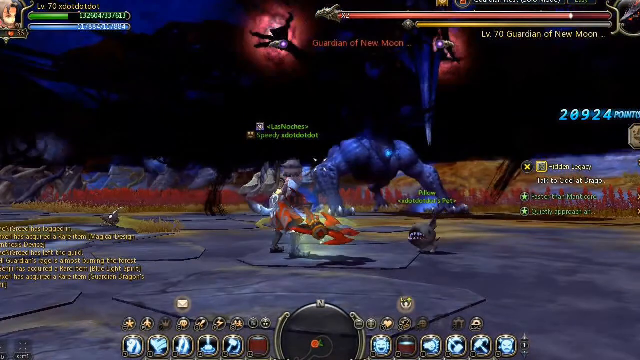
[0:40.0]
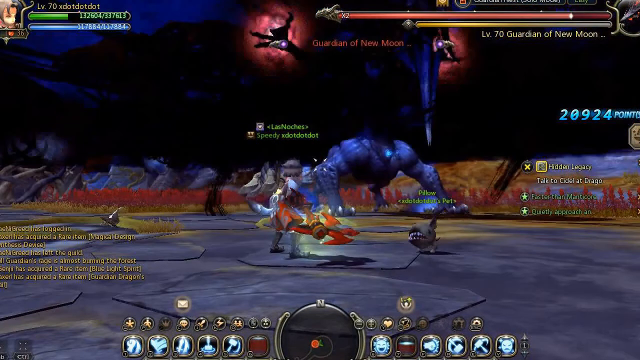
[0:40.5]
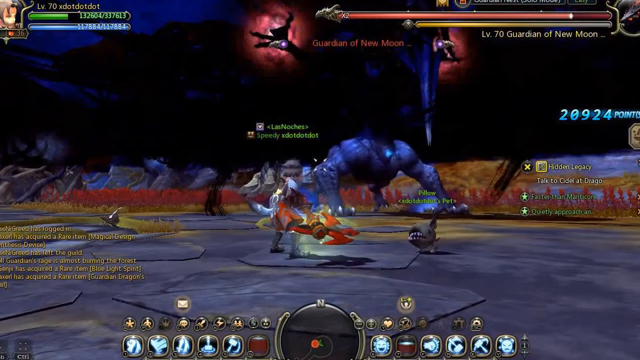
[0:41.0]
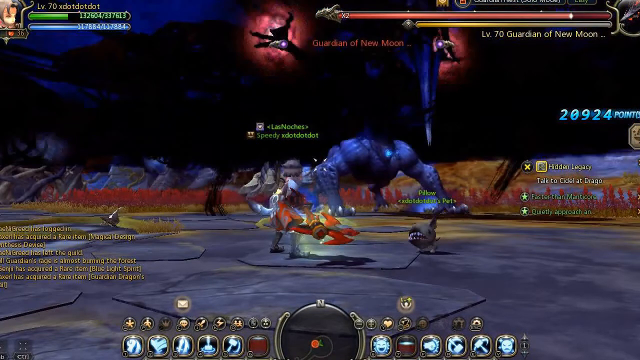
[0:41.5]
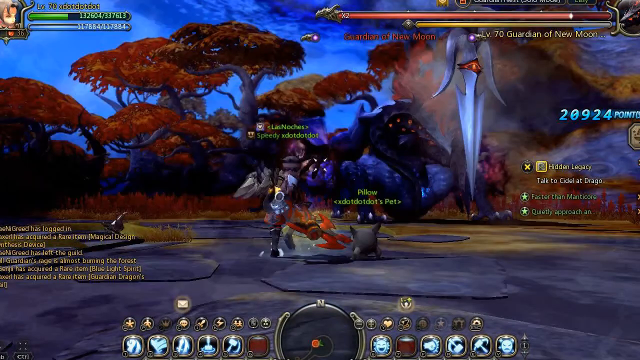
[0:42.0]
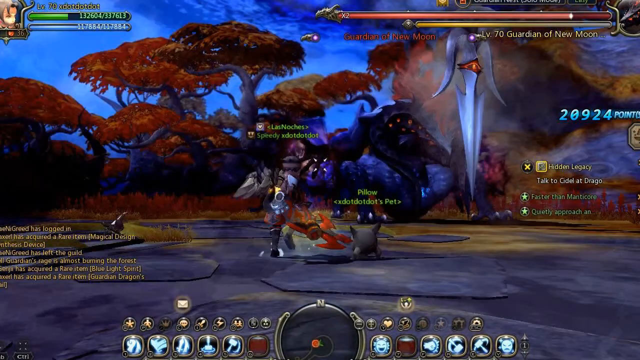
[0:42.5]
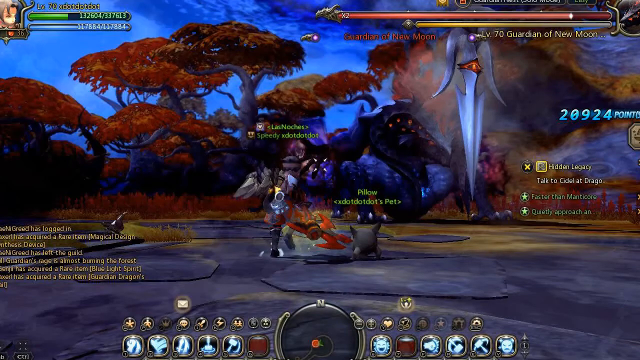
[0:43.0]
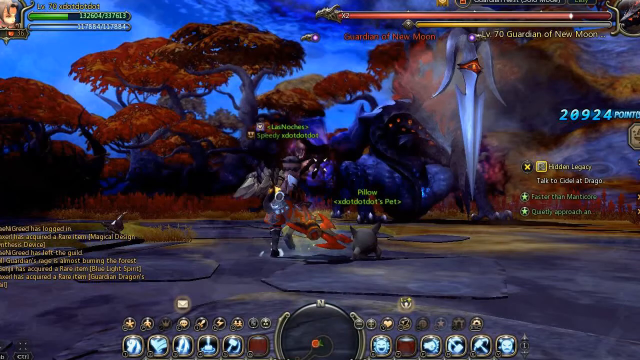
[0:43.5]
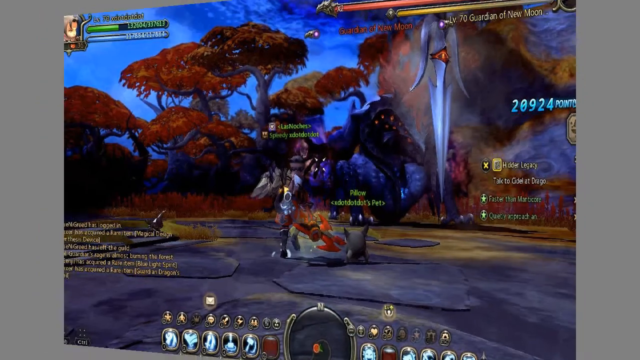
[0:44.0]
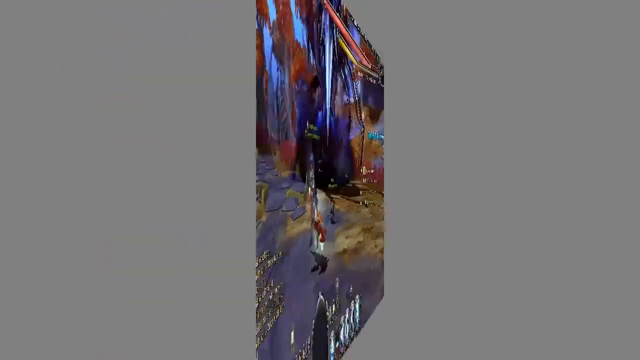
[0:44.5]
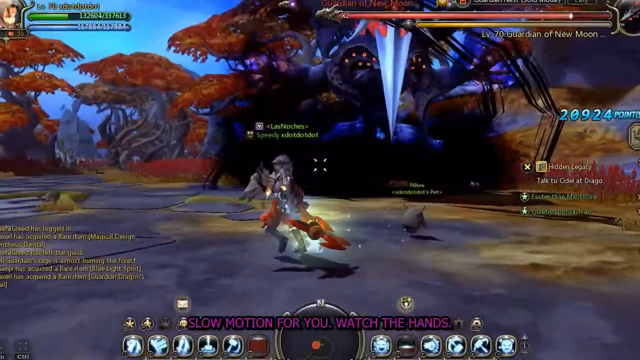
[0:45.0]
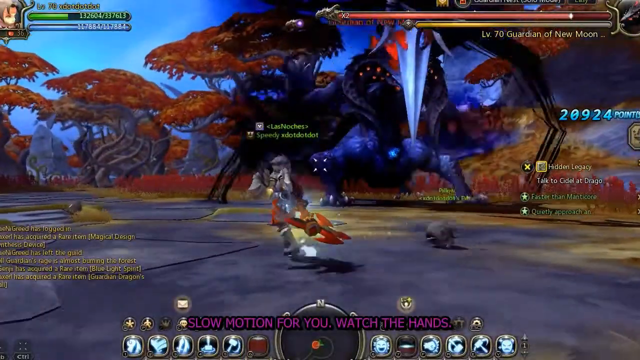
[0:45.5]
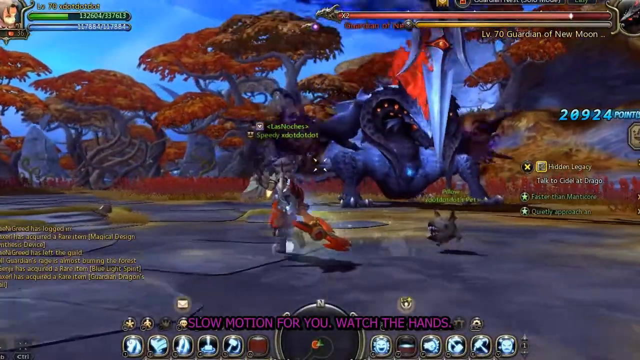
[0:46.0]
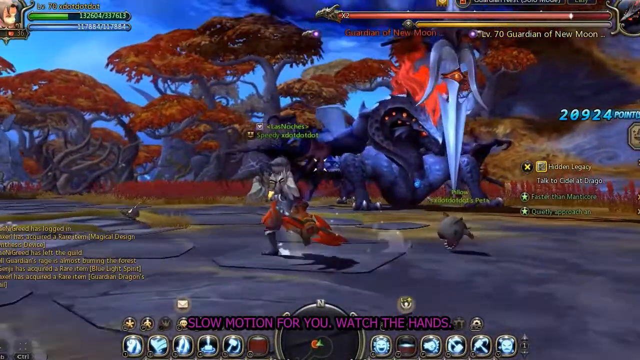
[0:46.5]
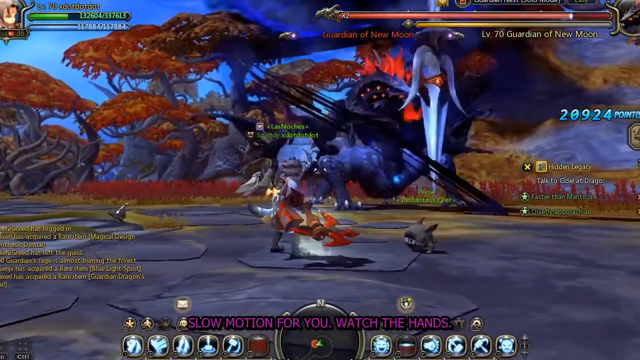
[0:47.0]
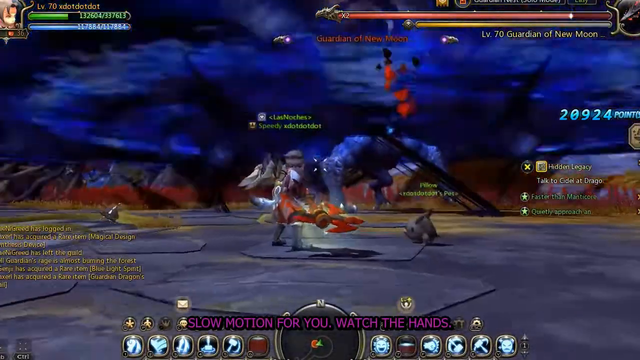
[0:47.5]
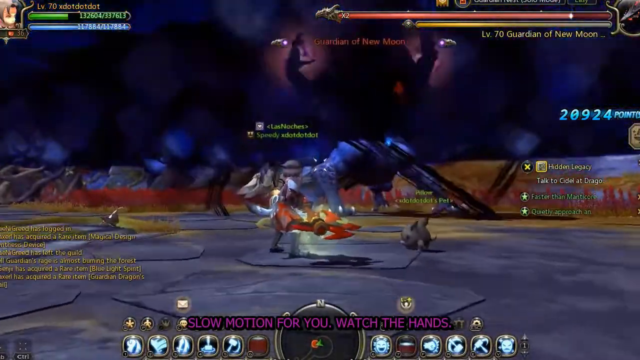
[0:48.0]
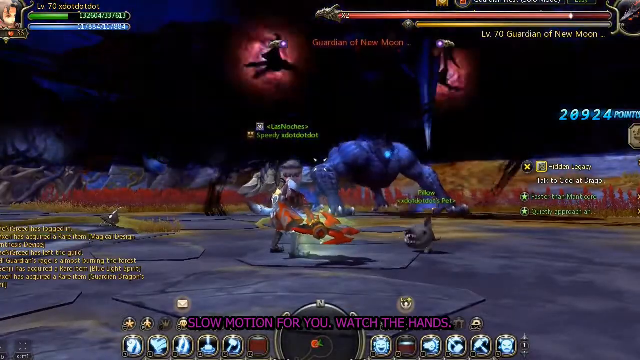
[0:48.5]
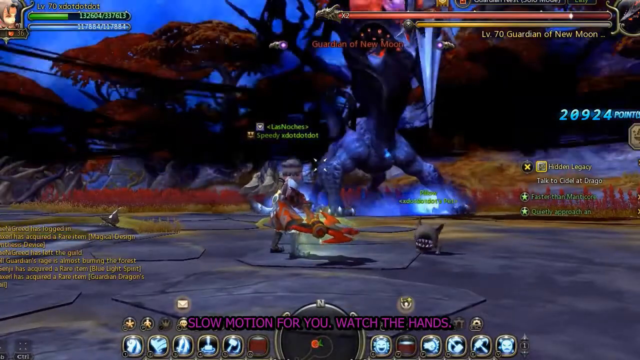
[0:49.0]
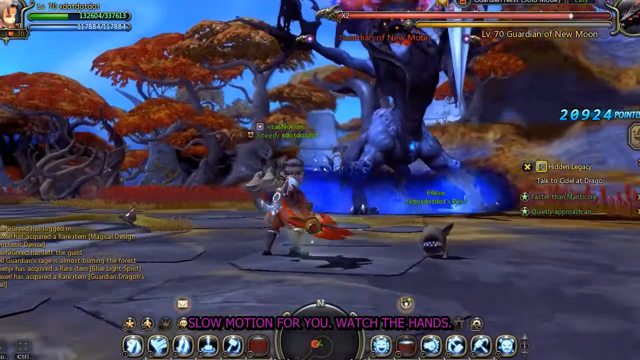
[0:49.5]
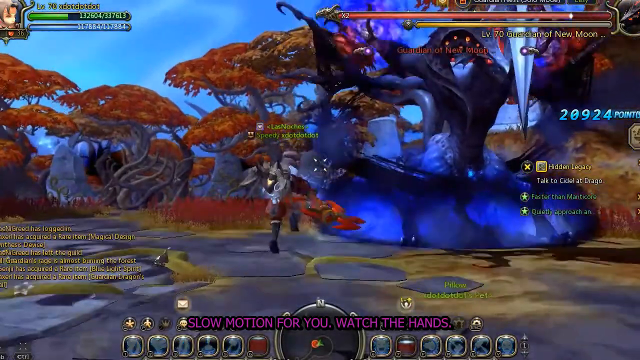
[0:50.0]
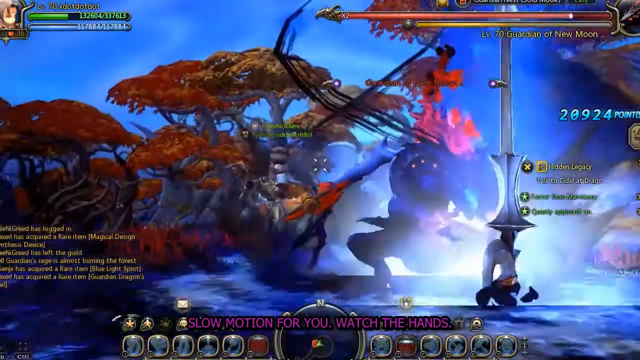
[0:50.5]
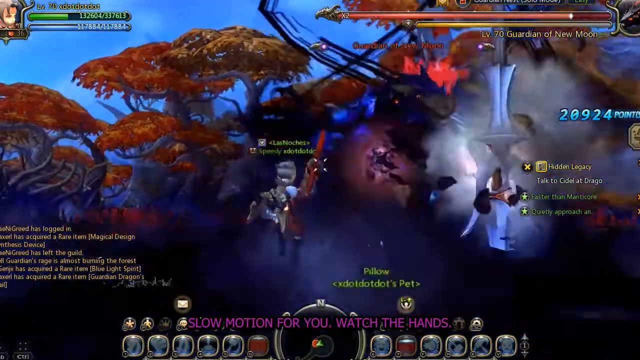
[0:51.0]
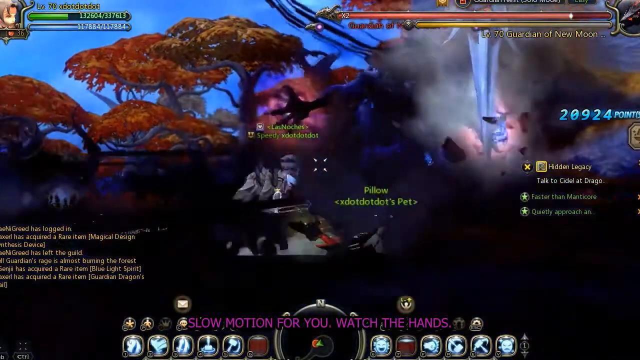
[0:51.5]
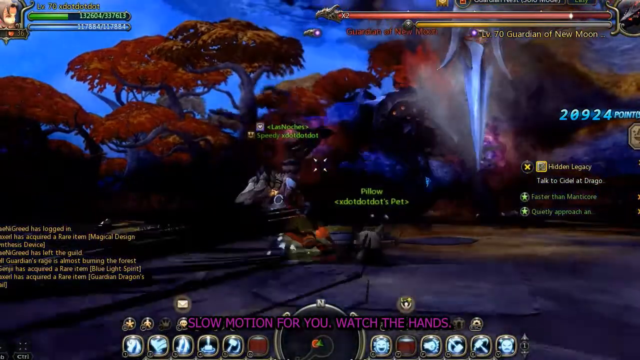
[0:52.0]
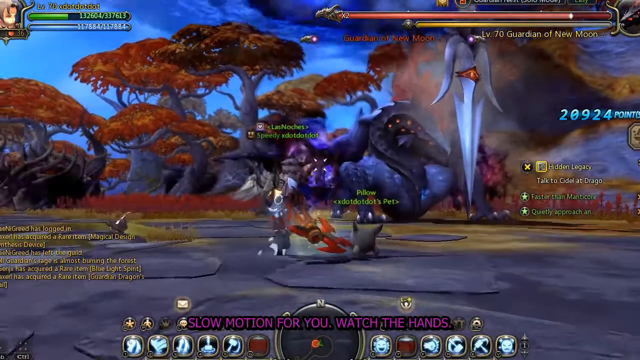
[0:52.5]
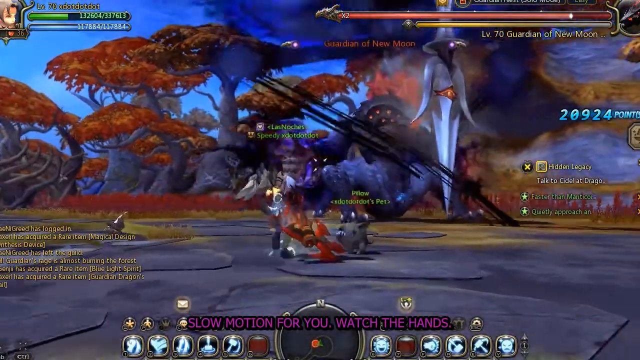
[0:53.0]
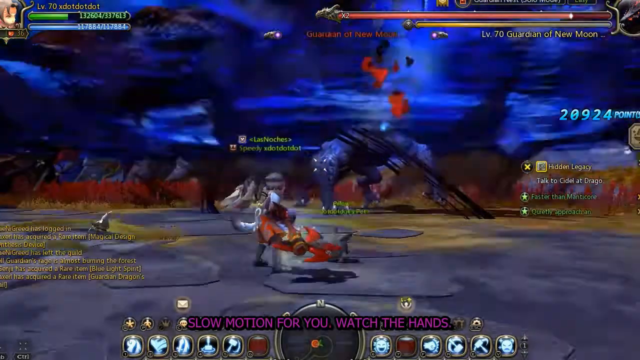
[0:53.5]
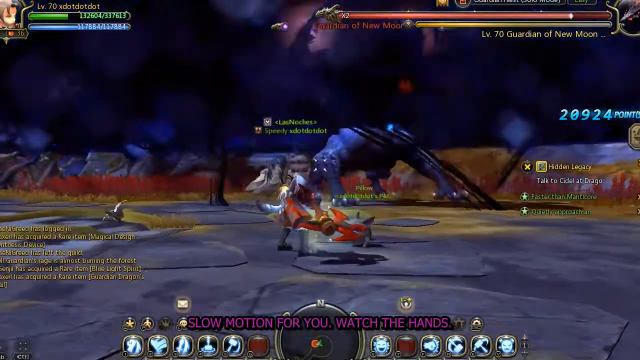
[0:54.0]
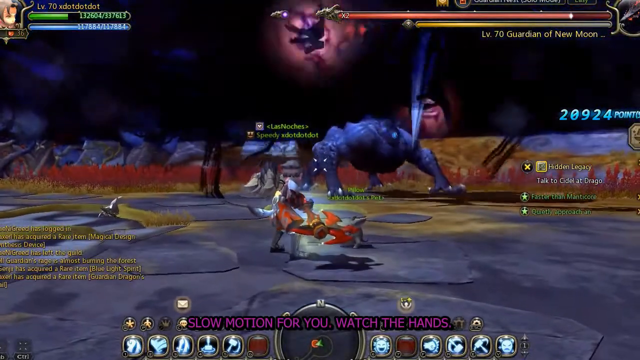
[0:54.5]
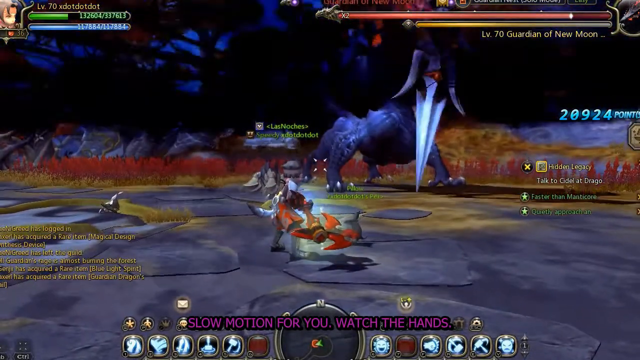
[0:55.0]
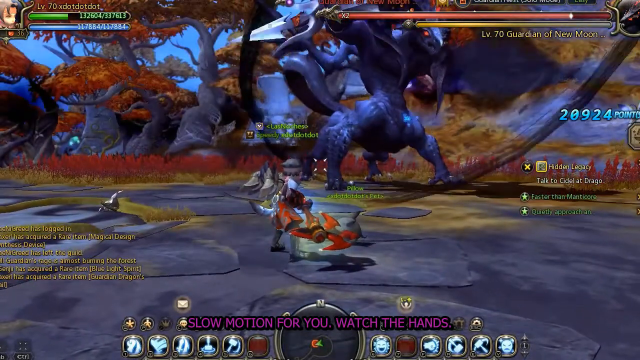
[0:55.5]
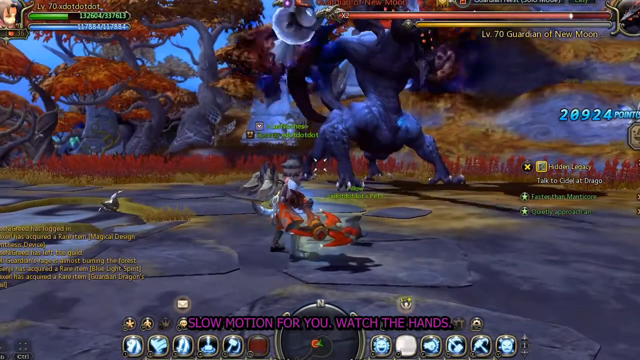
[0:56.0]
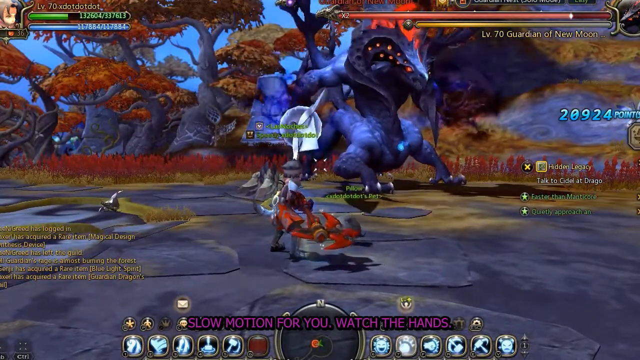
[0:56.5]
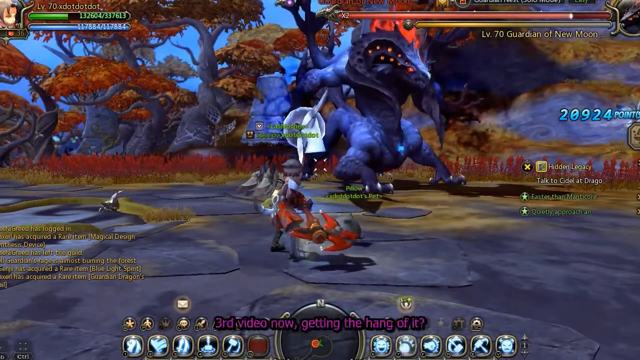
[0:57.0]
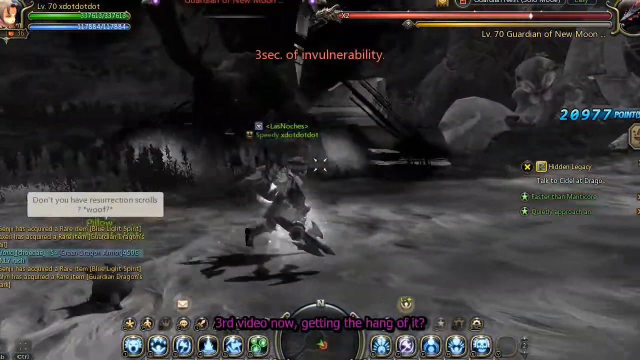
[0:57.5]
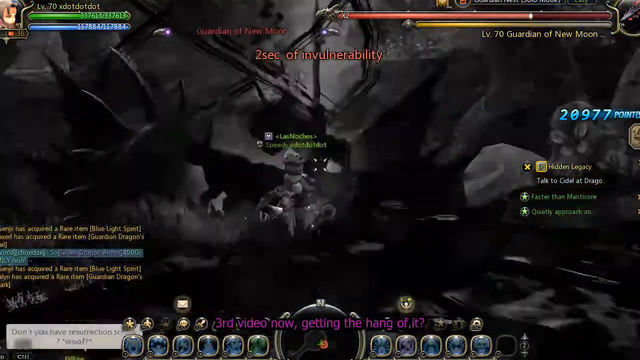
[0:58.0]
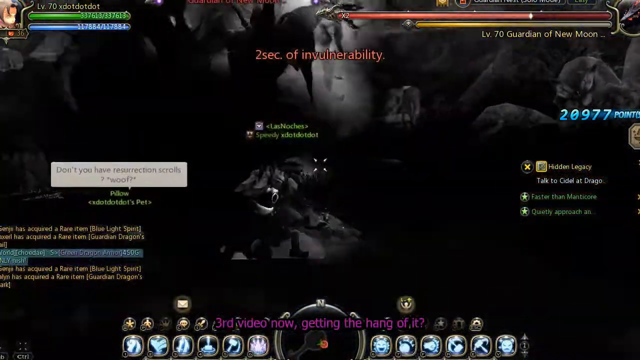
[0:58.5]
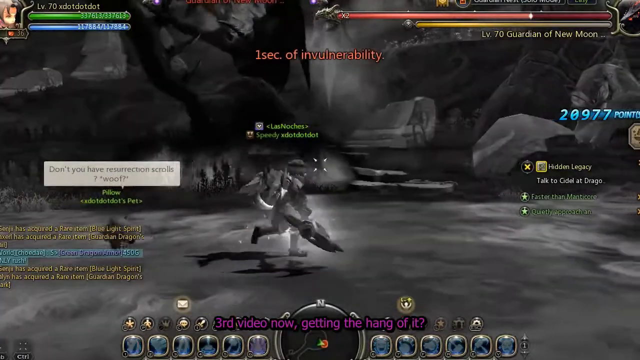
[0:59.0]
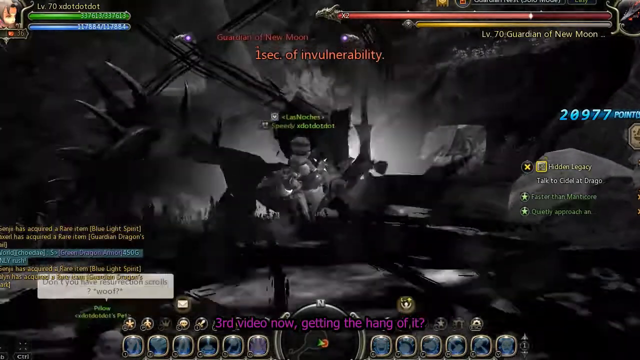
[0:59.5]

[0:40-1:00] The dragon is apparently fairly angry; there is fire, and he moves his dagger all around. The player's character runs and does not seem impressed by the dragon's display. The trees and plants are covered in red and gold leaves, the rocks are still there, and the scene still looks like it is in the mountains. The tops of the trees are rounded and almost look like mushrooms. The player apparently has 20,094 points, and big numbers in the upper left-hand corner suggest the player is acquiring a lot of things. There is a little dog with very big teeth.